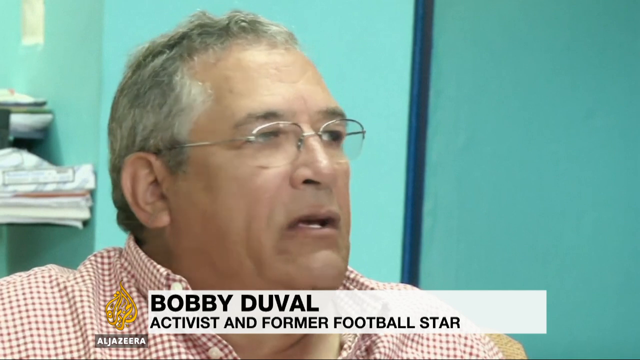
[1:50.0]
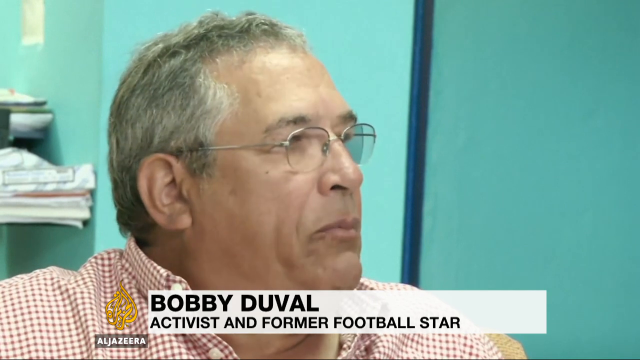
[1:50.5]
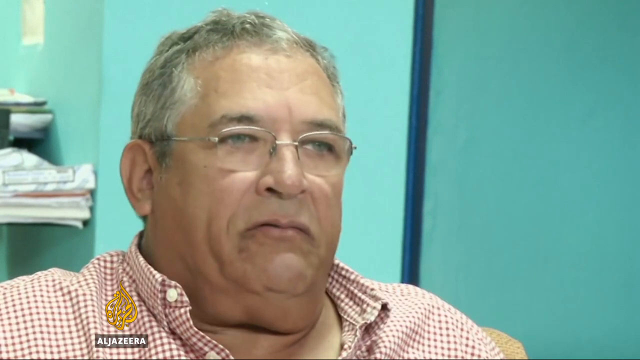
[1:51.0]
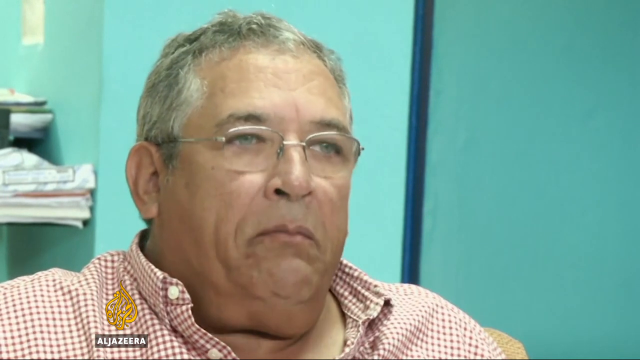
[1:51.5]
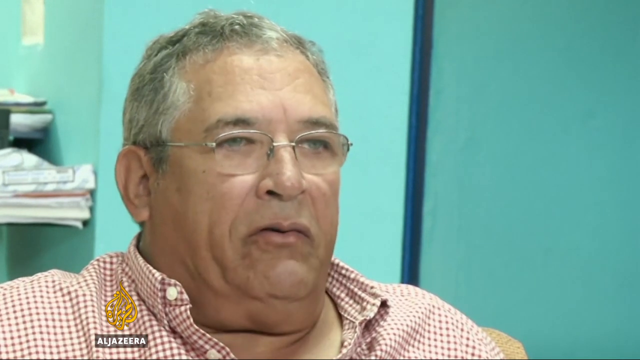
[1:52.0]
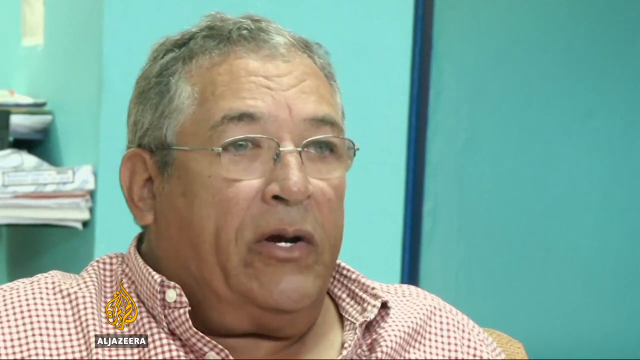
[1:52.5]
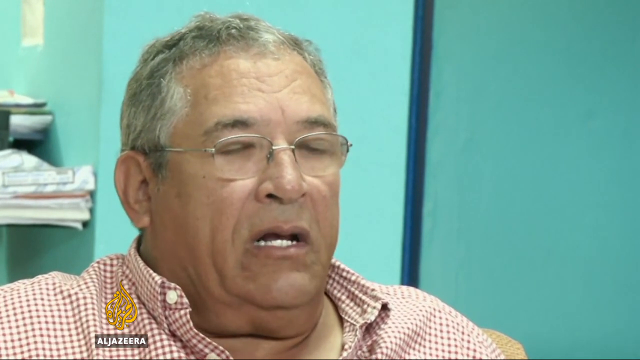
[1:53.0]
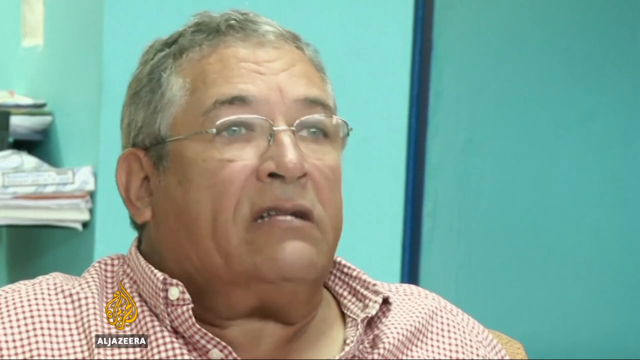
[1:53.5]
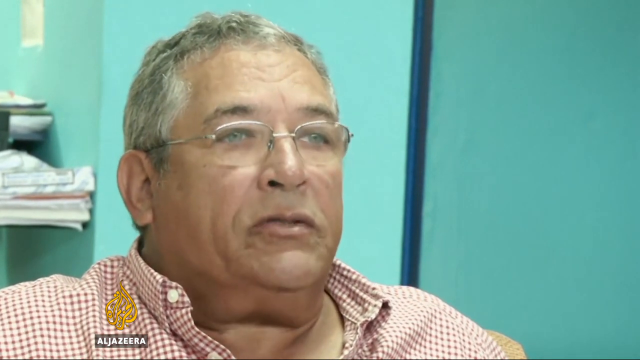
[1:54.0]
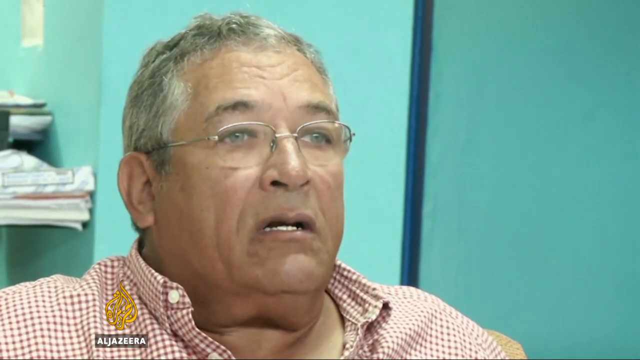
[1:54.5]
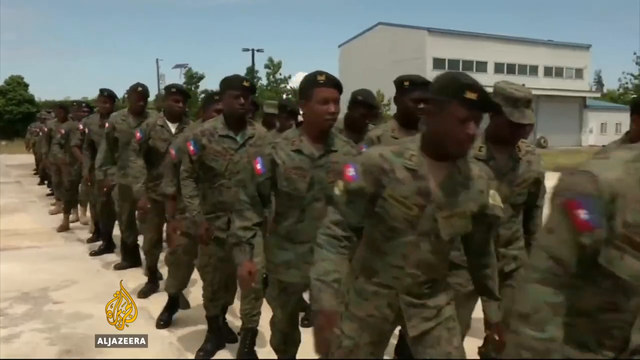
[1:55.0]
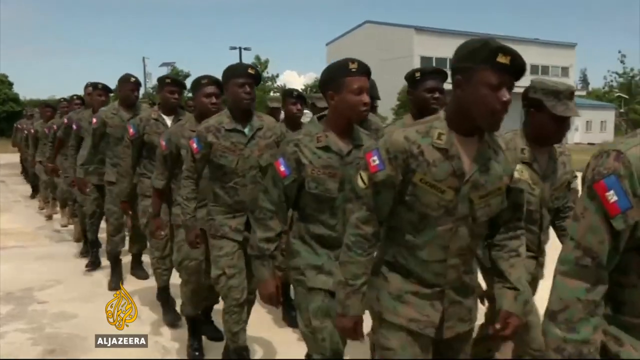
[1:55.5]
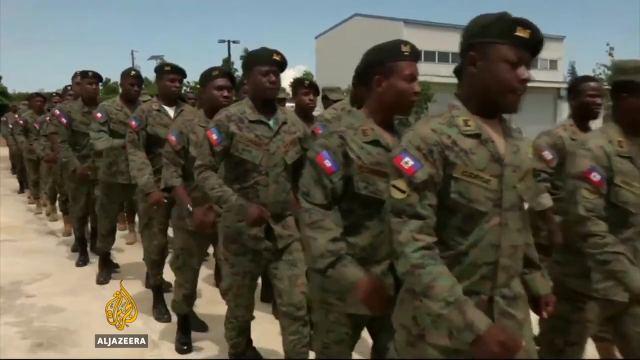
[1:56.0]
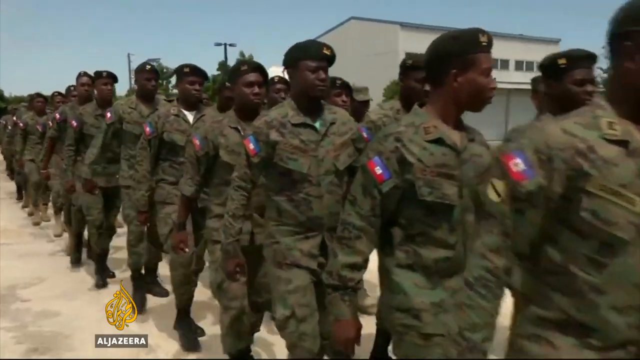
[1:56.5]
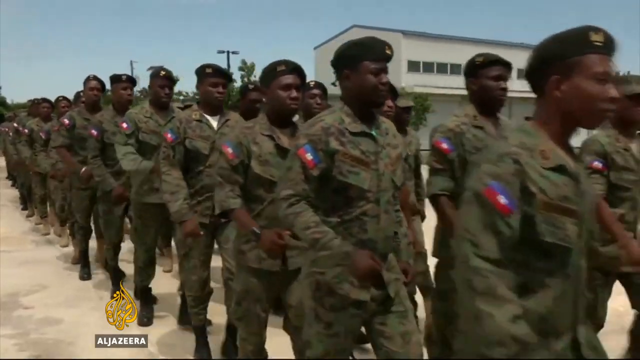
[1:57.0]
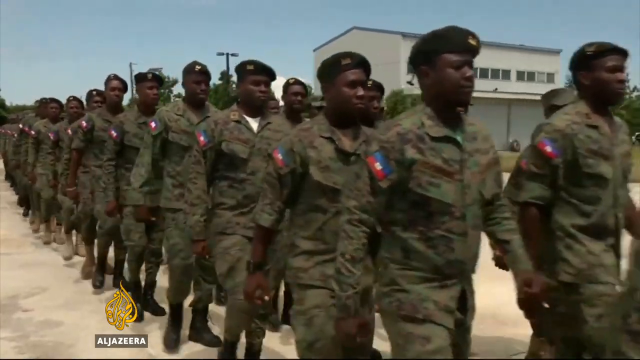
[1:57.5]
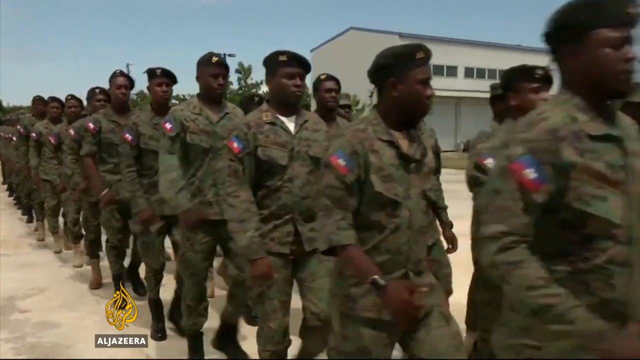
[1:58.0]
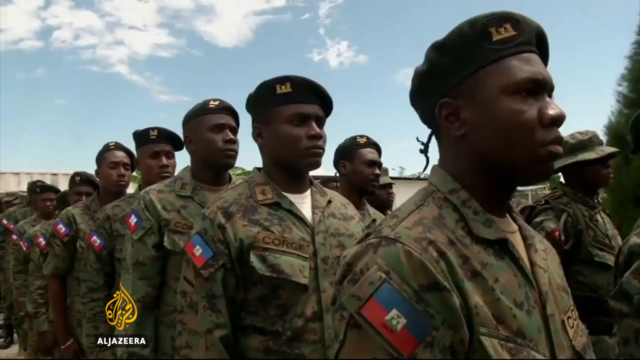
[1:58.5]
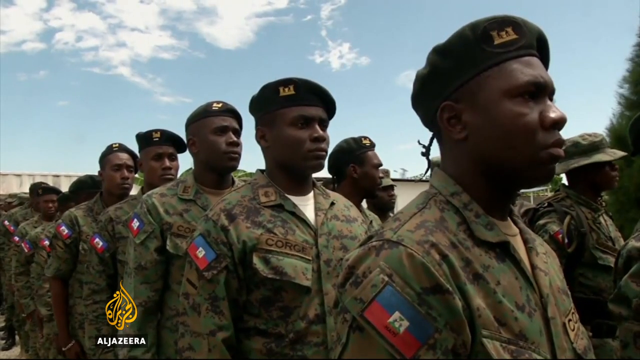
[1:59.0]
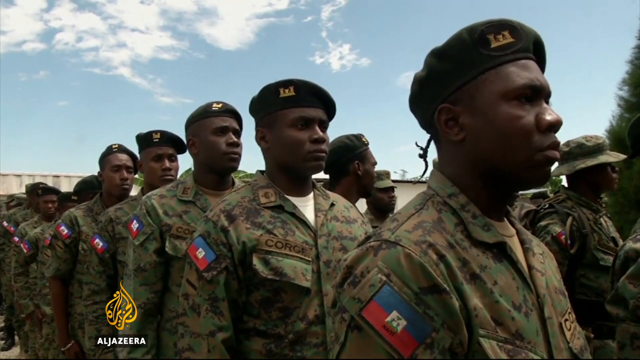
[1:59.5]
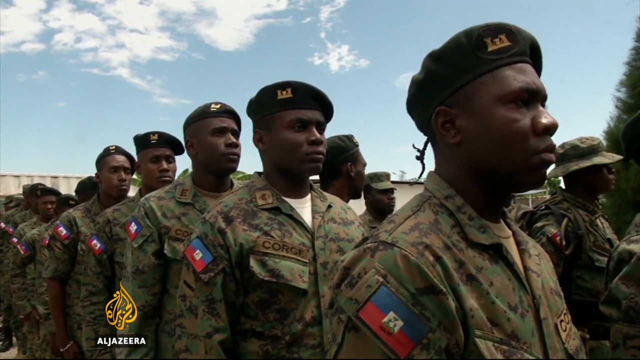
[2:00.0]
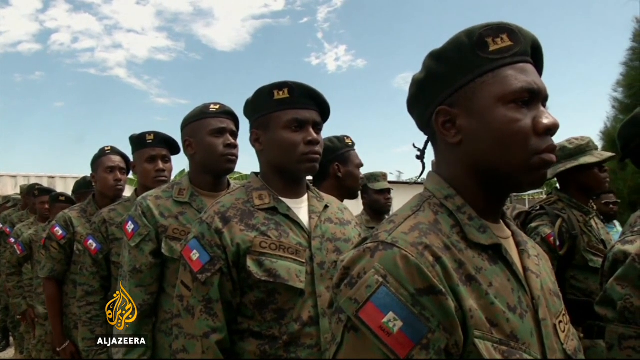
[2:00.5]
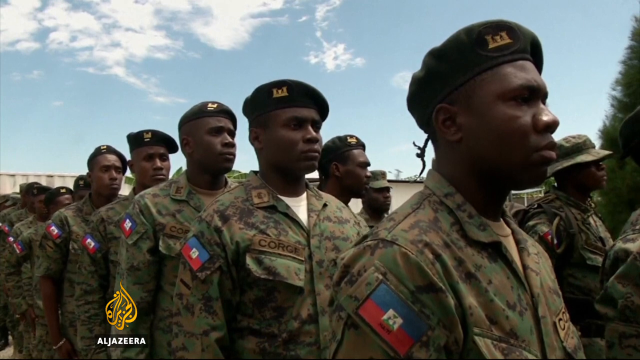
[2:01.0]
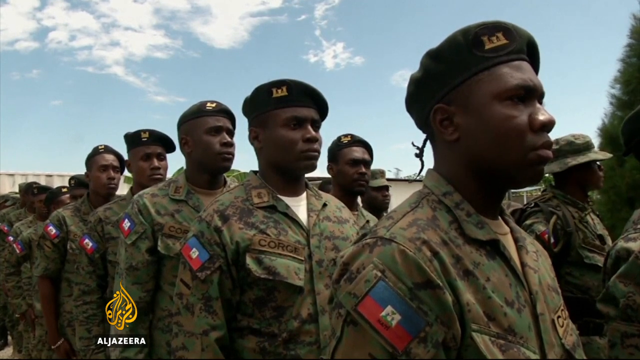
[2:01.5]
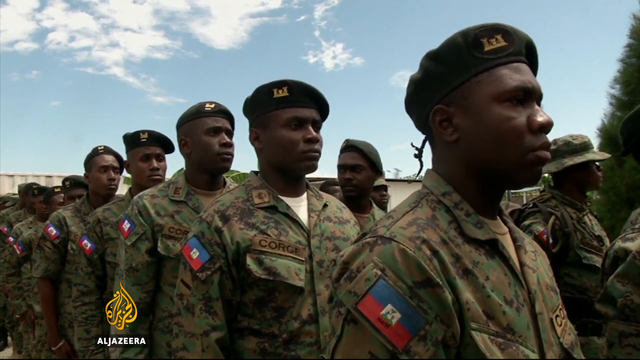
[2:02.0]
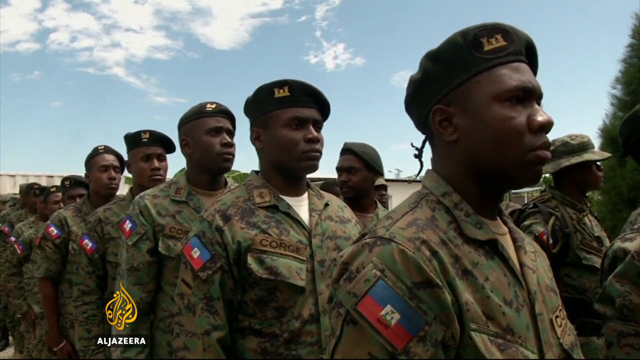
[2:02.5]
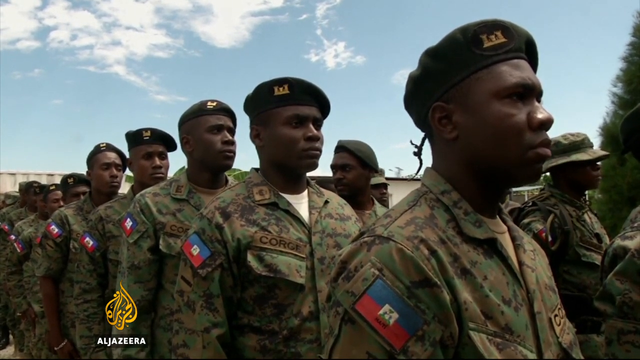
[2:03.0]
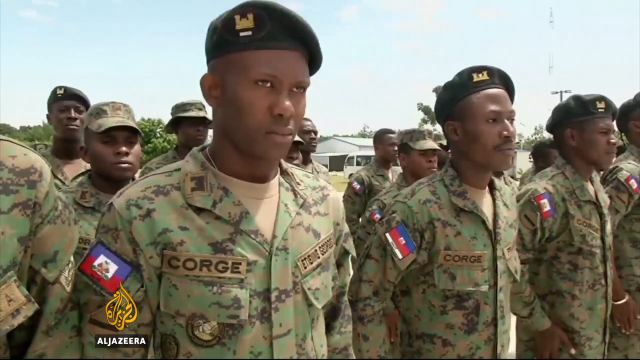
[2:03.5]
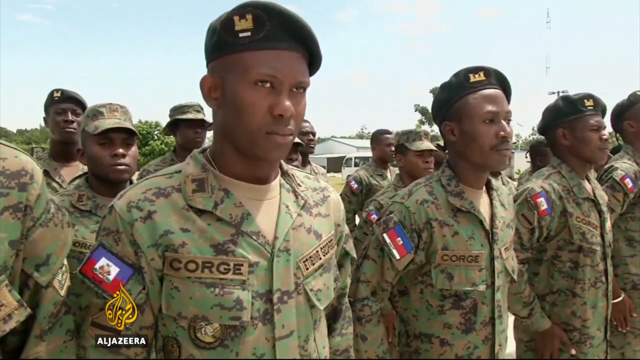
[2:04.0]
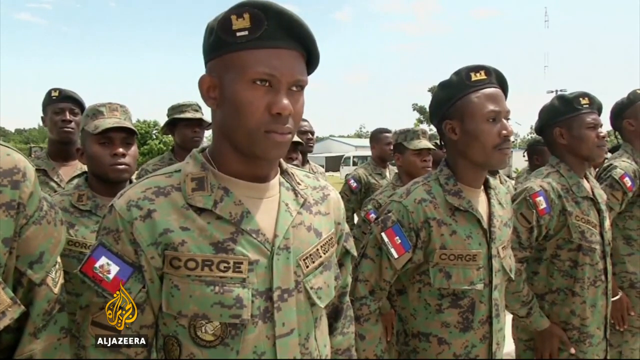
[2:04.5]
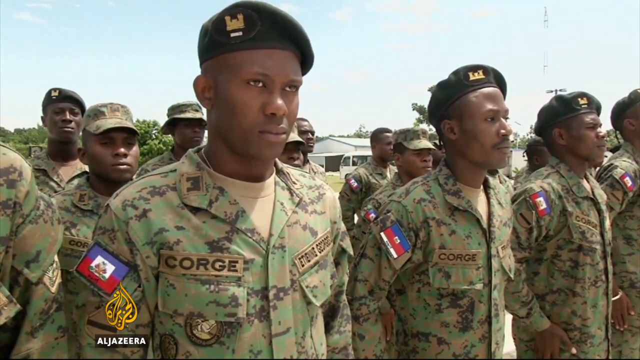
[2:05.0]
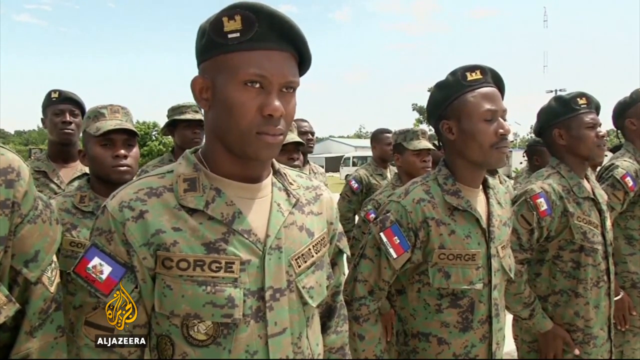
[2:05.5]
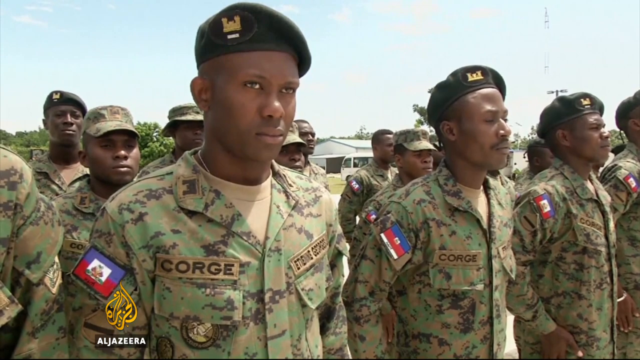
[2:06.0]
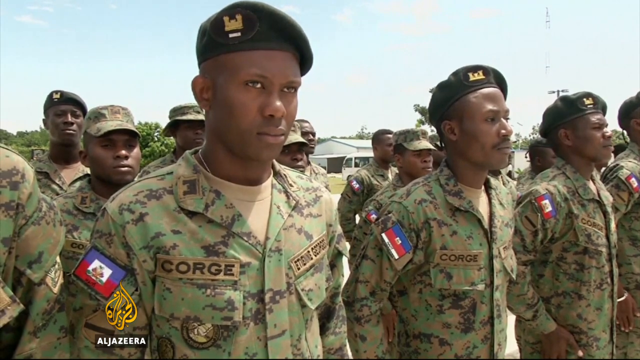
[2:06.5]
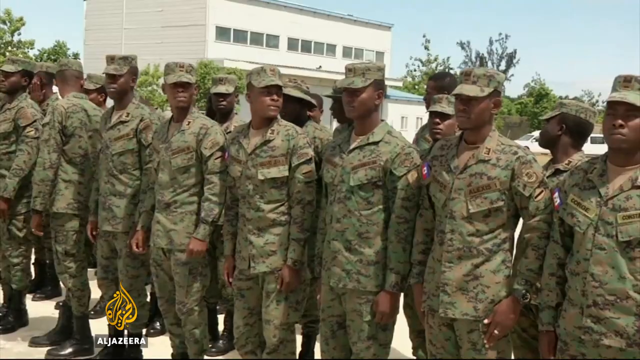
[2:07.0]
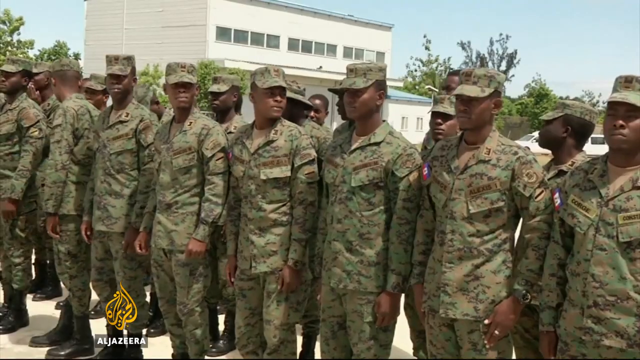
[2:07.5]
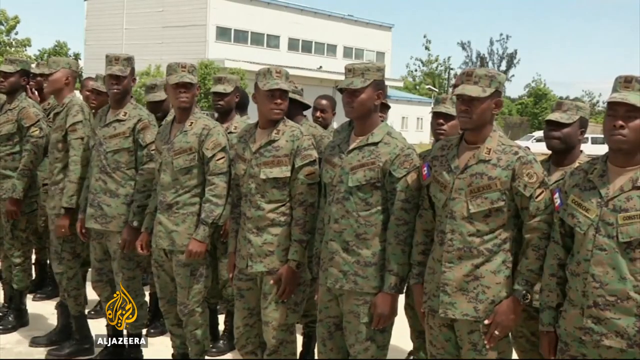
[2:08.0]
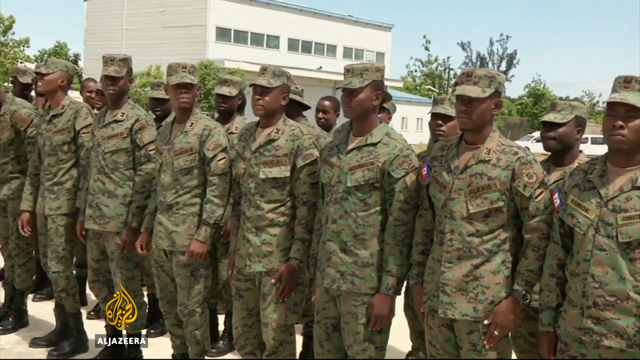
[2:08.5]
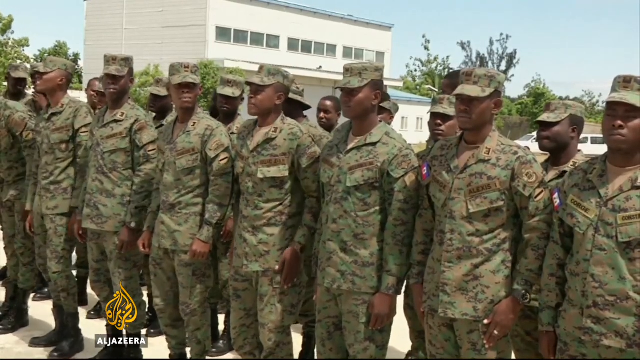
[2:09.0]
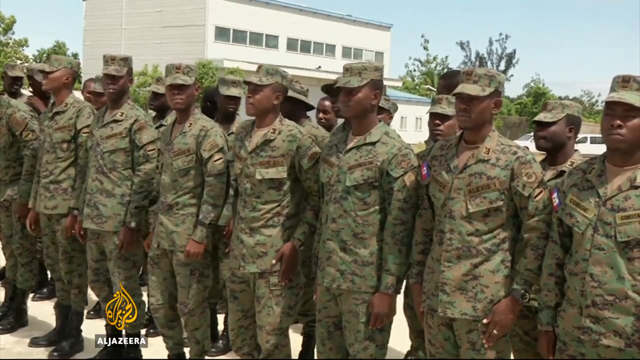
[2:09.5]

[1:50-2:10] Headings read "Haitian plans army withdraw", along with the Al Jazeera logo. Haitian soldiers wear beret hats with a logo on the side, and others wear camouflage fatigues and square-looking hats, with a patch of some sort on the left upper arm and shoulder area. They stand outside, and it looks to be very warm. Bobby Duvall, an activist and former football star, speaks, looking very casual, probably in an interview. He is an older gentleman with graying hair and glasses, wears an orange small-checkered shirt, and appears very serious. Young men of the army are shown, and the text "Al Jazeera is funded in whole or in part by the Qatari" is in the upper left corner.